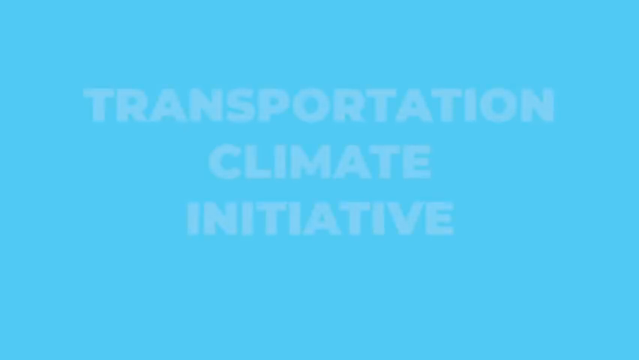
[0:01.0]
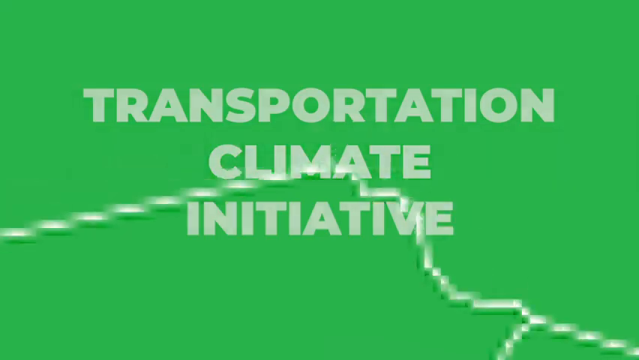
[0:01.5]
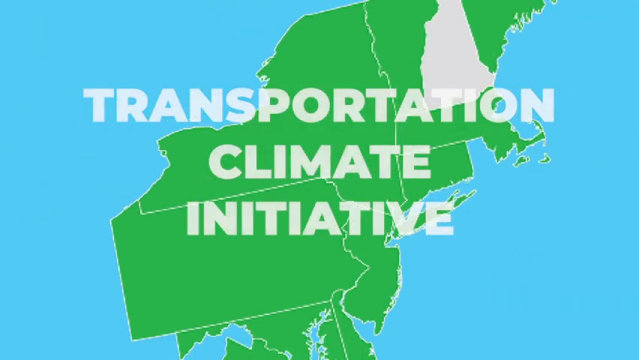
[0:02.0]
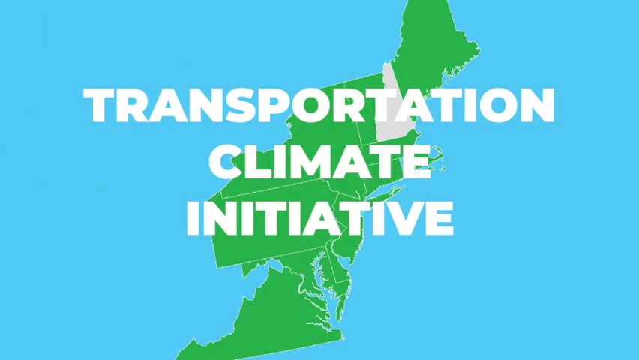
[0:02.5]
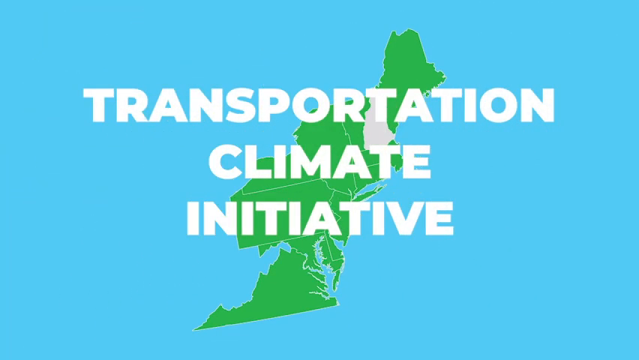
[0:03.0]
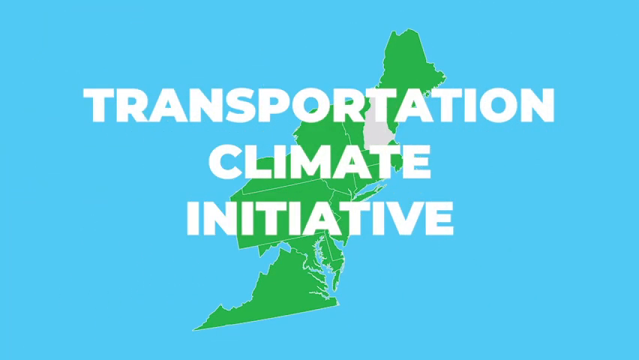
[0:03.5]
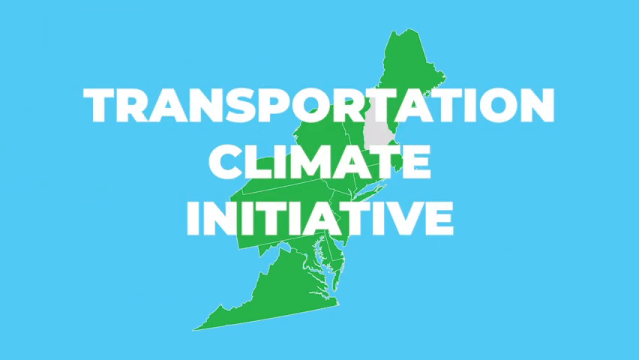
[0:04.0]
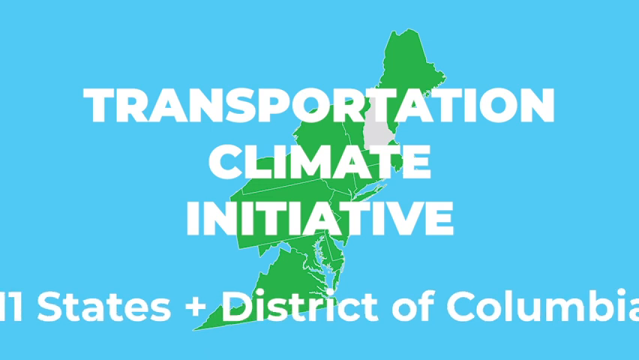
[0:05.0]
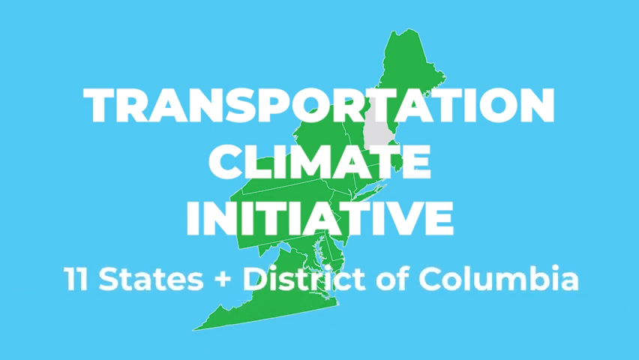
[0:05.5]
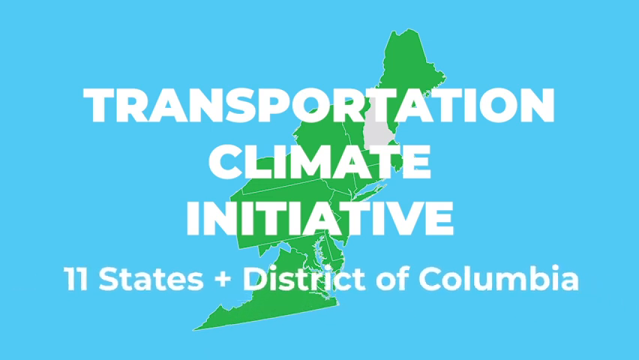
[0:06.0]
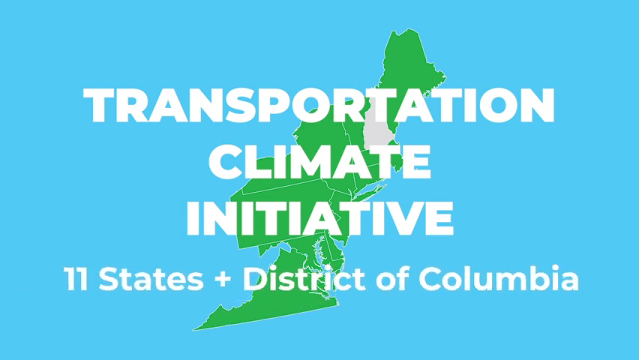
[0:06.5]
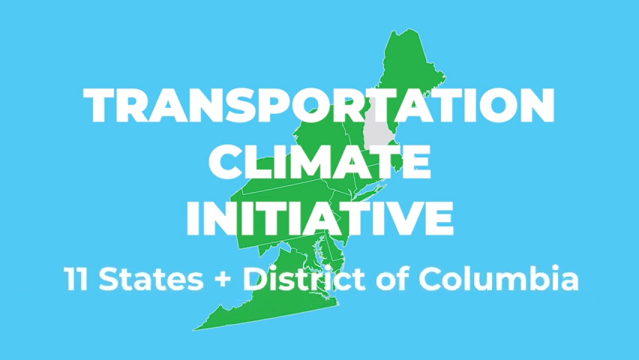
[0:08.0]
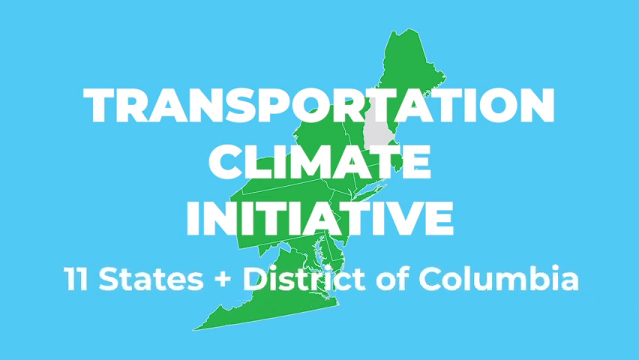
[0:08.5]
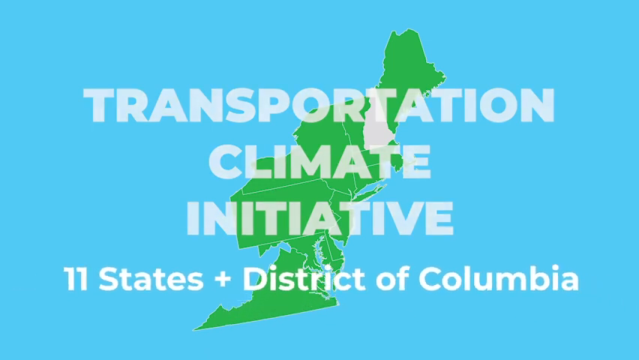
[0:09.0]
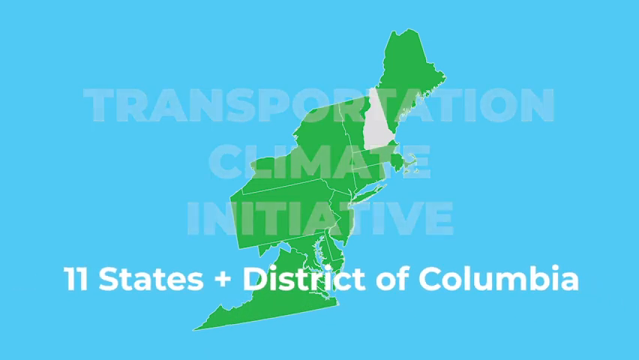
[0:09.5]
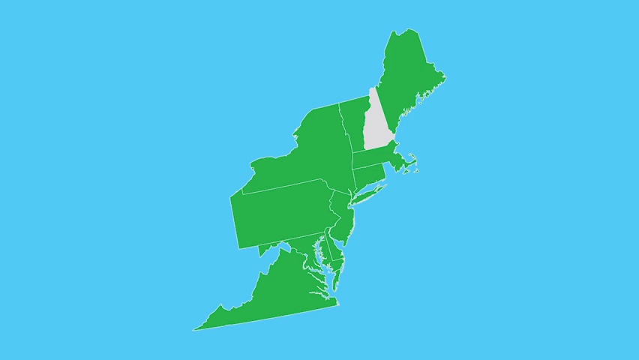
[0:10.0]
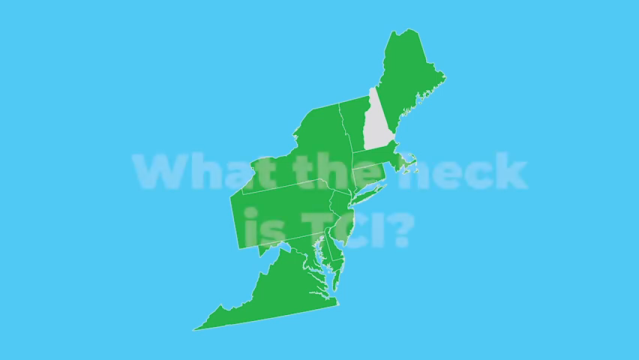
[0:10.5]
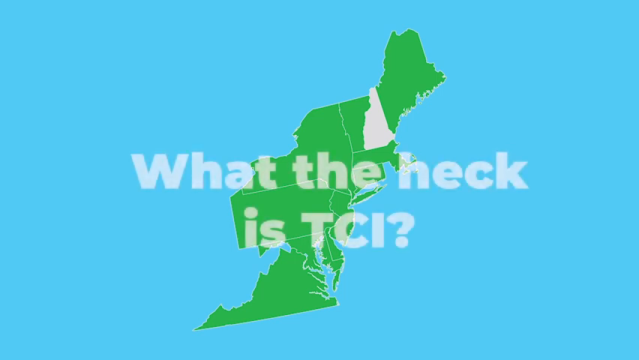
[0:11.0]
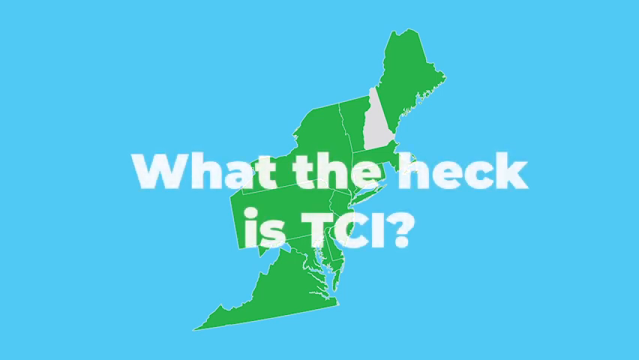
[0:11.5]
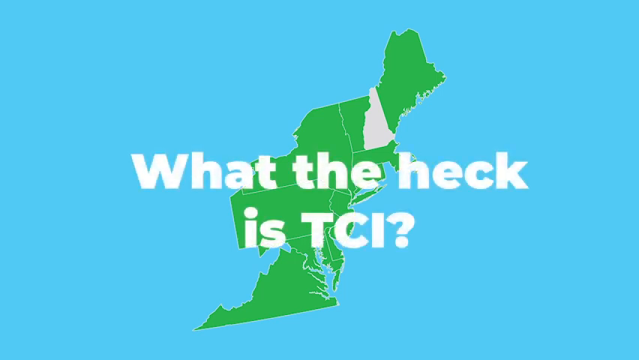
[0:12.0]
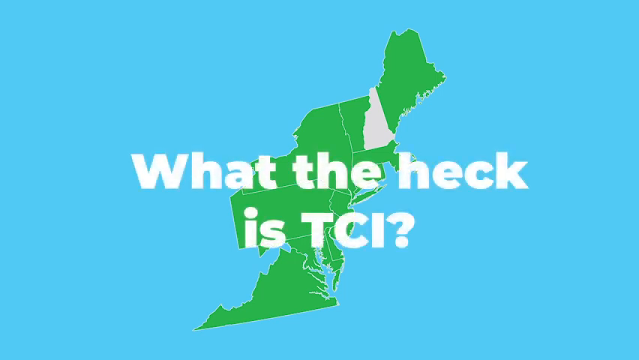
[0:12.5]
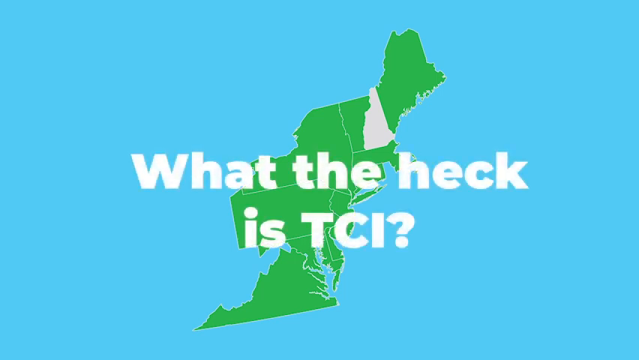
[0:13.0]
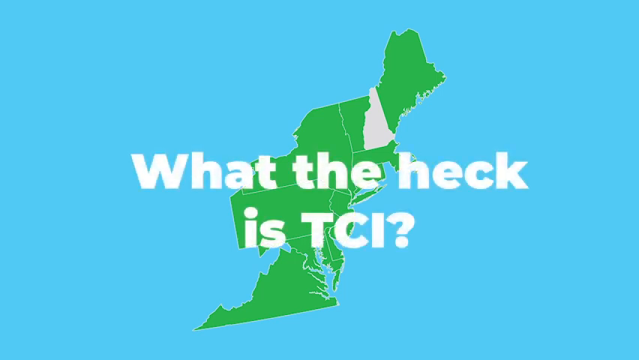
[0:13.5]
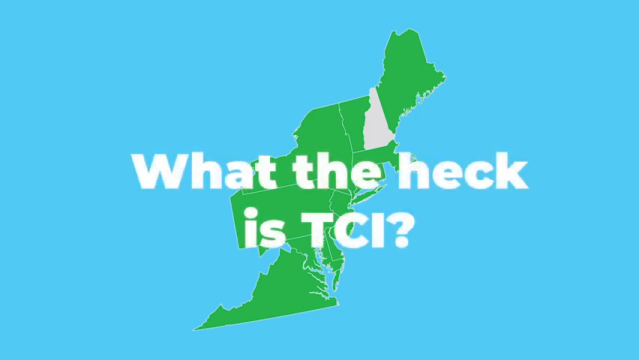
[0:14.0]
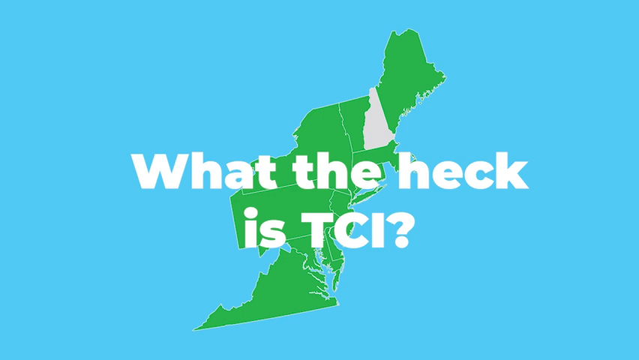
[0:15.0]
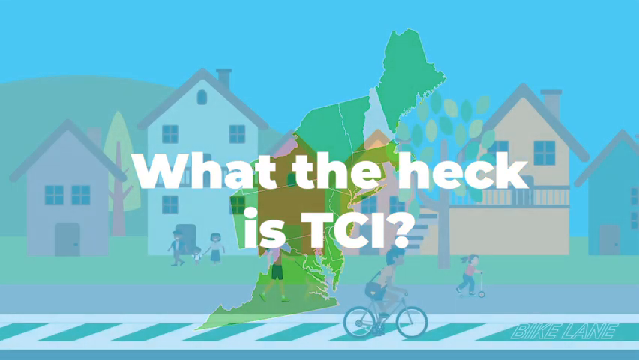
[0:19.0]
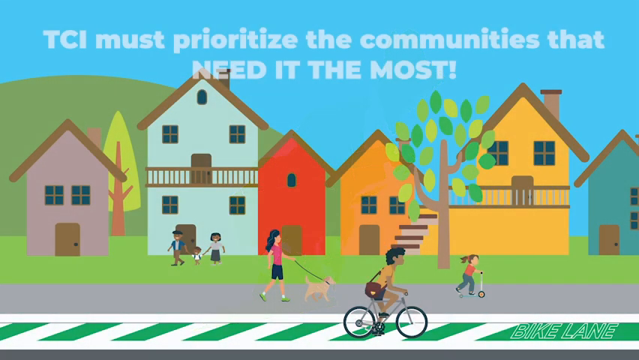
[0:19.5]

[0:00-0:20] The video opens on a light blue background, and the words "Transportation Climate Initiative" appear in white. There is sort of a zoom in on a clump of US states, the New England area, which appear in green in the center on top of the blue background. Another white pop-up reads "11 states plus District of Columbia," and then the text changes to "what the heck is TCI?" A cartoon image of a neighborhood follows: homes on a street in a very flat, two-dimensional, vector style, with a little hill in the background and a couple of trees. There are people: a little girl on a scooter who appears to be Caucasian, with light brown pigtails, and a boy on a bike with darker skin who looks maybe Hispanic. A woman with dark hair, wearing a pink top and black shorts, is walking a small tan dog down the street. A family in the background has darker pigmented skin, though the animation style makes their nationality hard to tell. Over top, white text reads "TCI must prioritize the communities that need it the most."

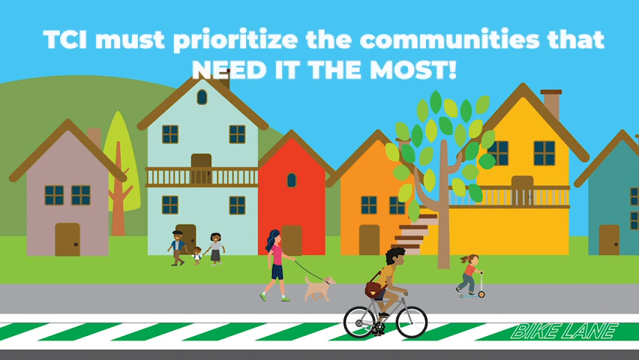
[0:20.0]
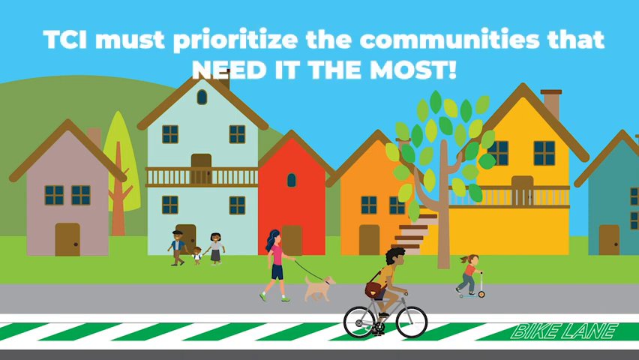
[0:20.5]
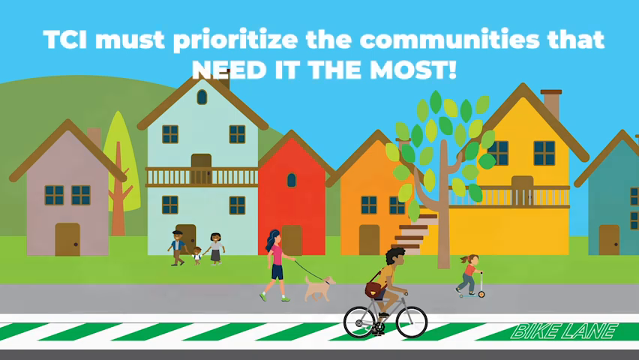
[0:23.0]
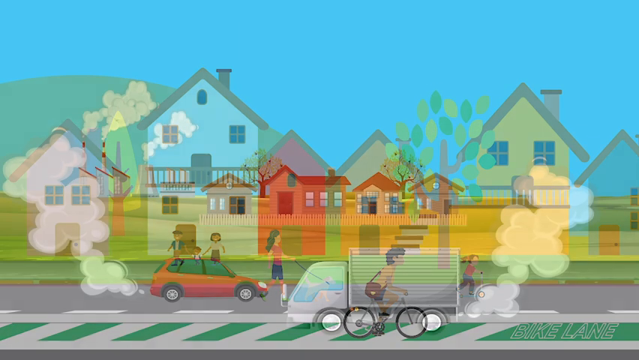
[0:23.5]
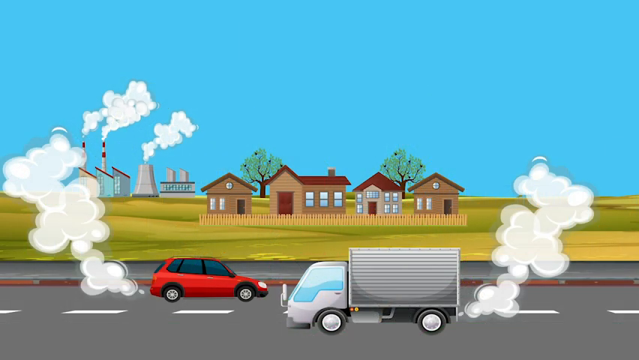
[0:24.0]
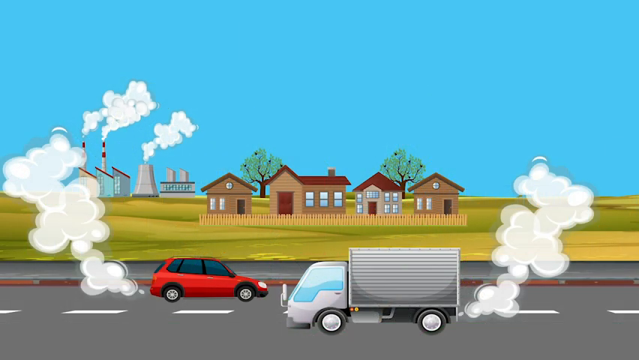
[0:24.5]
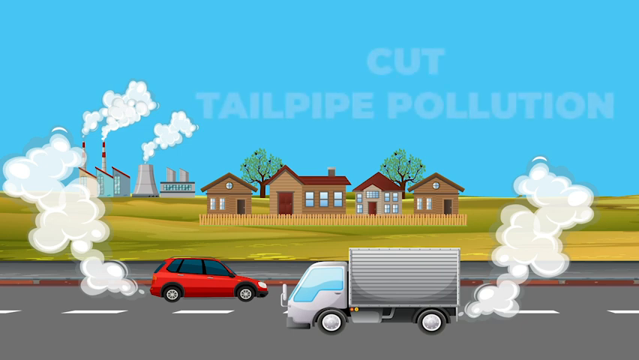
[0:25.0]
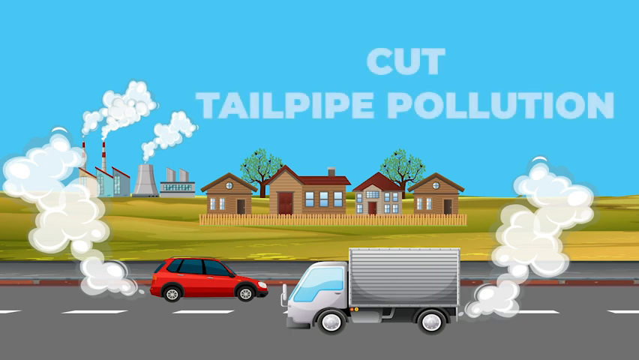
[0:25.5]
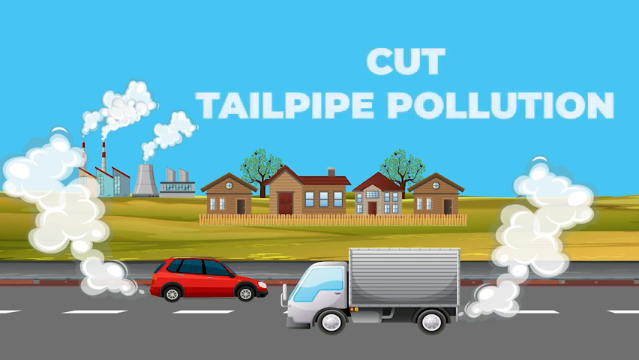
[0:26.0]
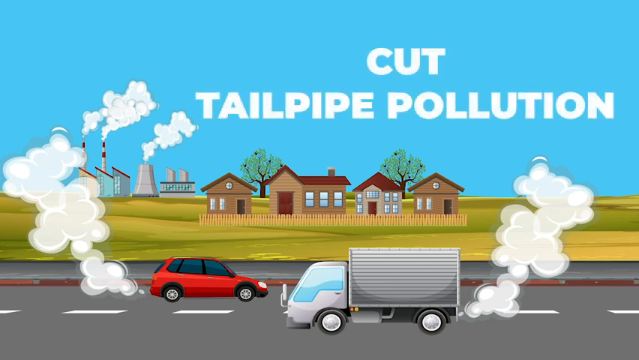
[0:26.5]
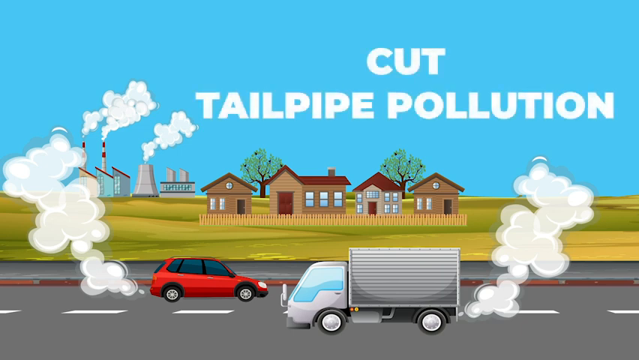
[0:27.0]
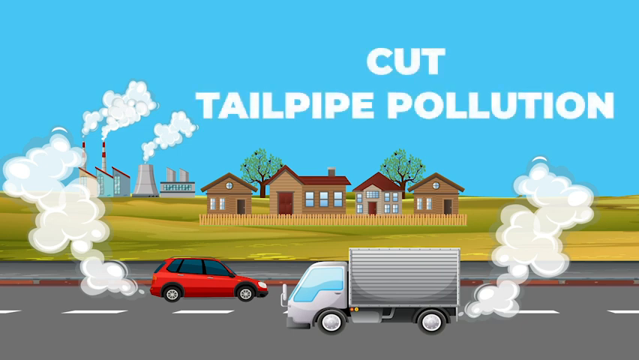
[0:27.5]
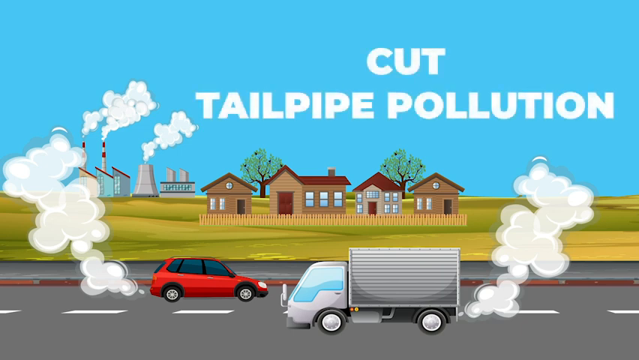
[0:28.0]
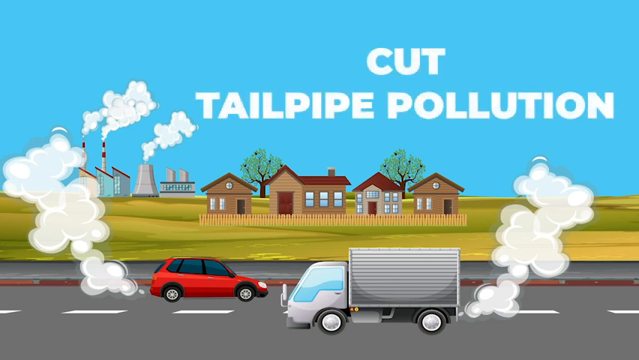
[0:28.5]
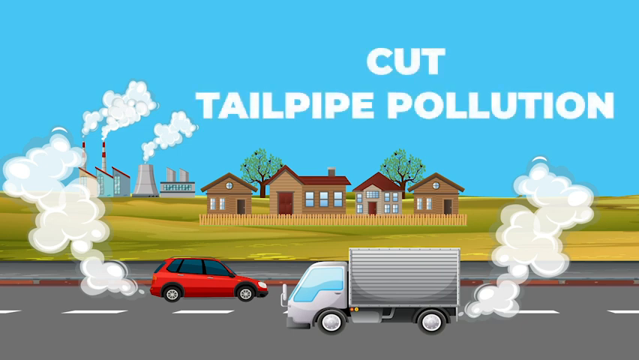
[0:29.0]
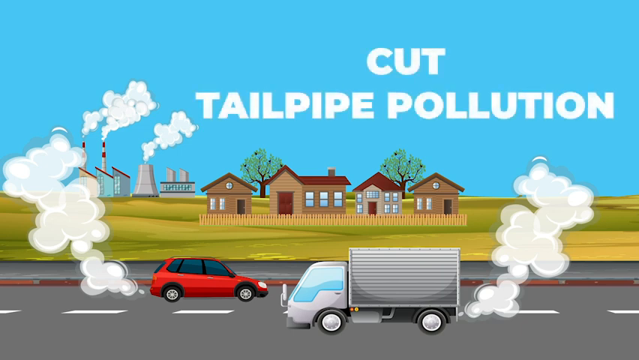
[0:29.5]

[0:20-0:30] The neighborhood image changes to a new cartoon image of what looks like almost flat prairie land, with a couple of trees and a few fenced-in homes in front. Off in the distance is some kind of production plant with smokestacks, and clouds of pollution in the background come from the industrial businesses. In the foreground is a highway, where a red car with a lot of exhaust coming out heads from left to right, and a box truck with a lot of exhaust heads the opposite way, from right to left. White text pops up on the screen: "cut tailpipe pollution." The drawing is very flat and two-dimensional, and the homes are all brown or tan with brown trim, plain and unremarkable.